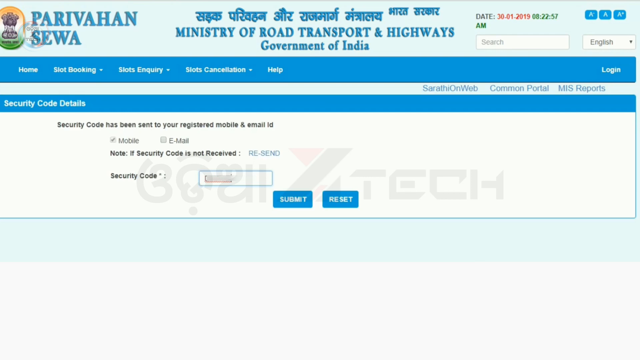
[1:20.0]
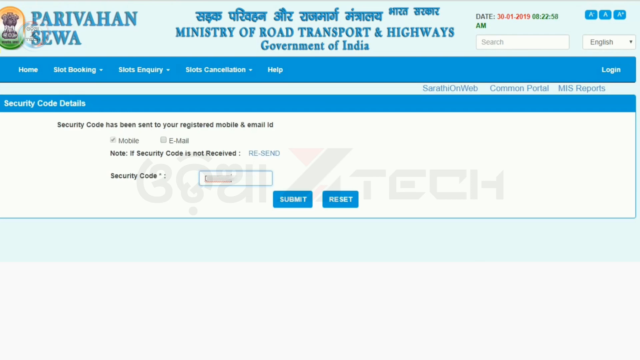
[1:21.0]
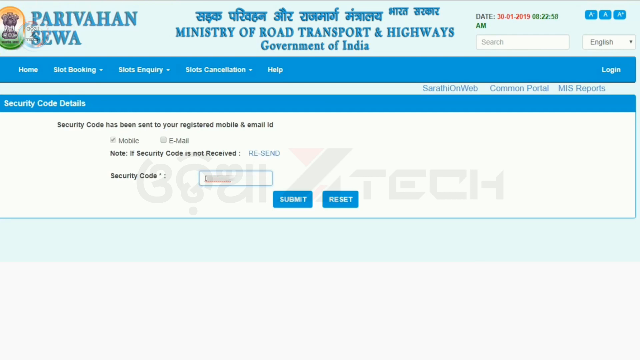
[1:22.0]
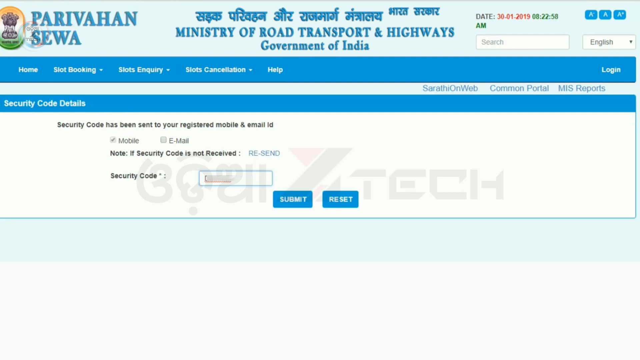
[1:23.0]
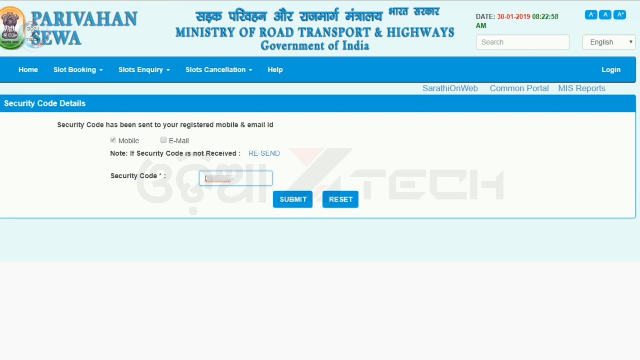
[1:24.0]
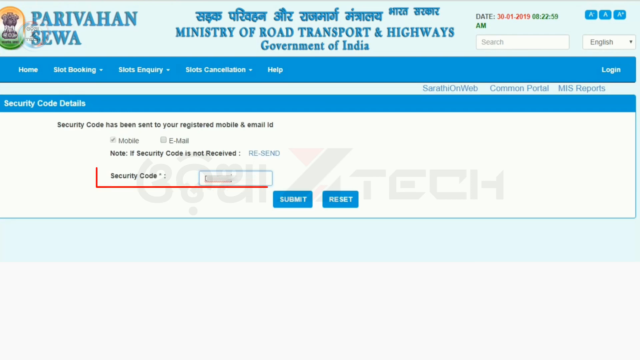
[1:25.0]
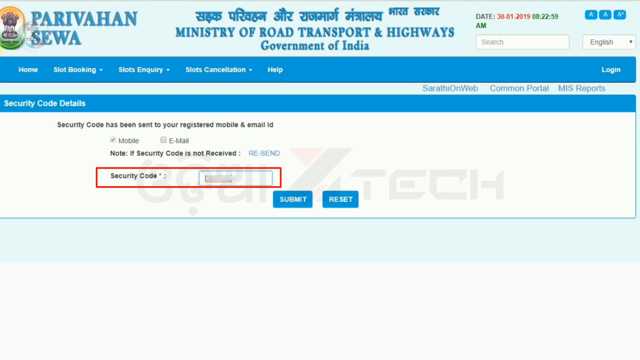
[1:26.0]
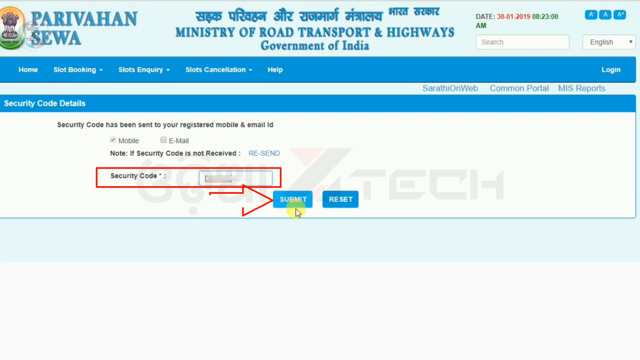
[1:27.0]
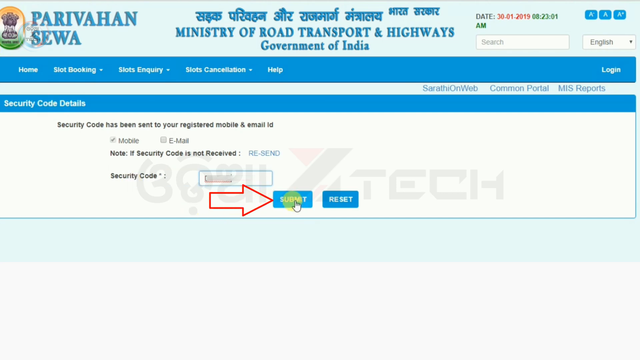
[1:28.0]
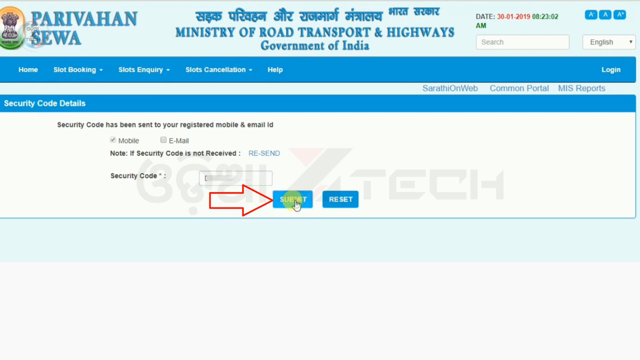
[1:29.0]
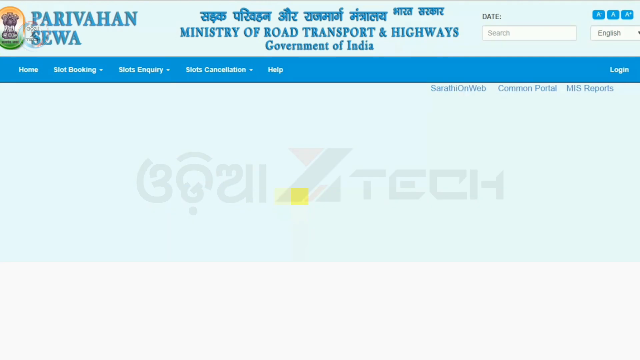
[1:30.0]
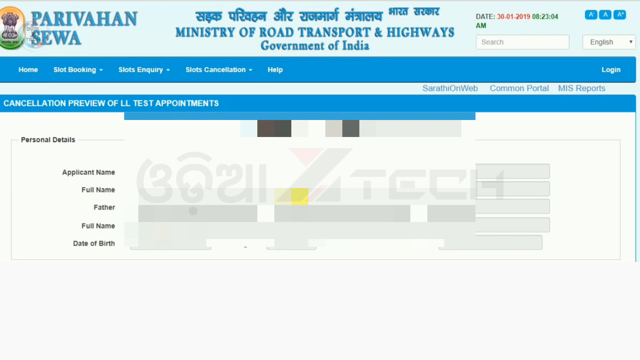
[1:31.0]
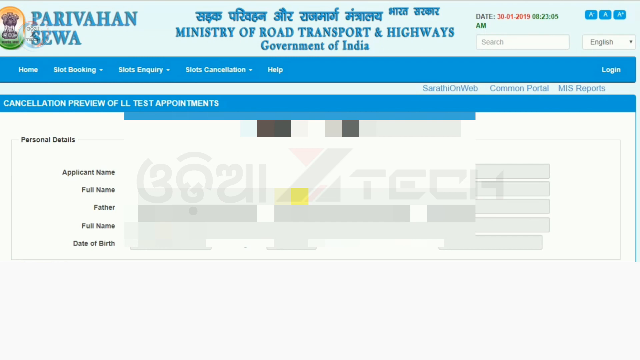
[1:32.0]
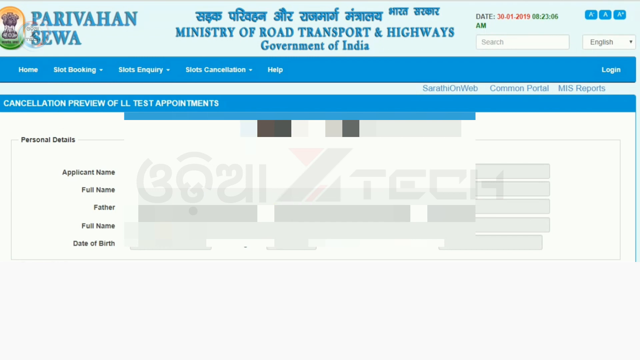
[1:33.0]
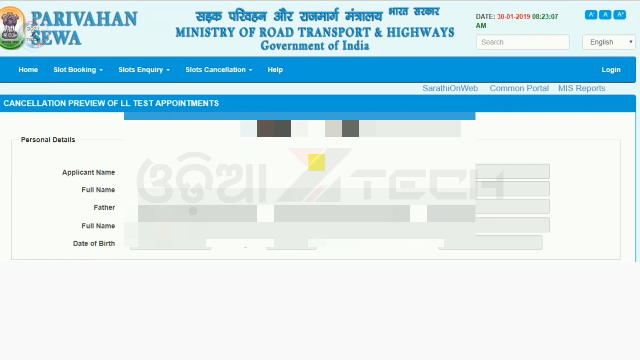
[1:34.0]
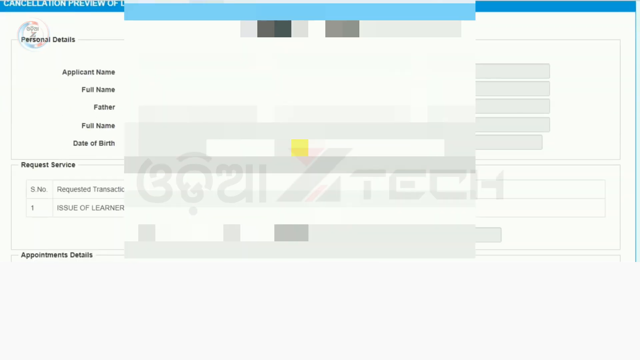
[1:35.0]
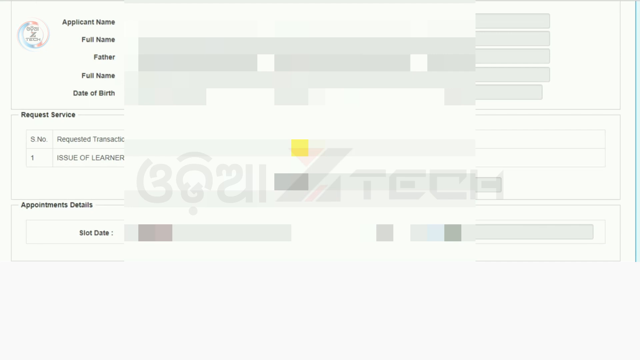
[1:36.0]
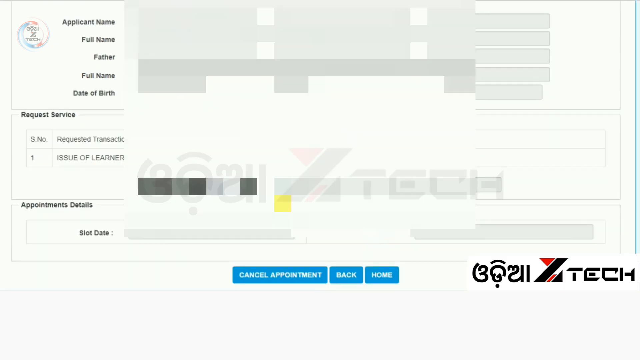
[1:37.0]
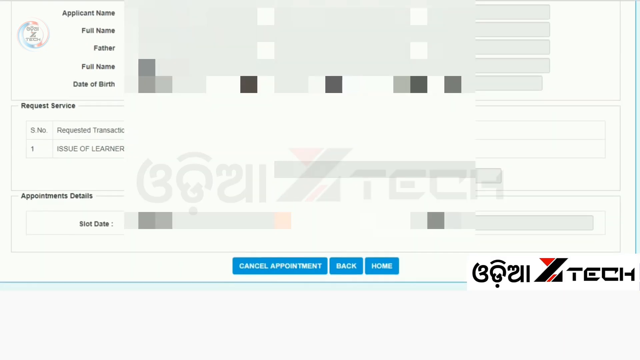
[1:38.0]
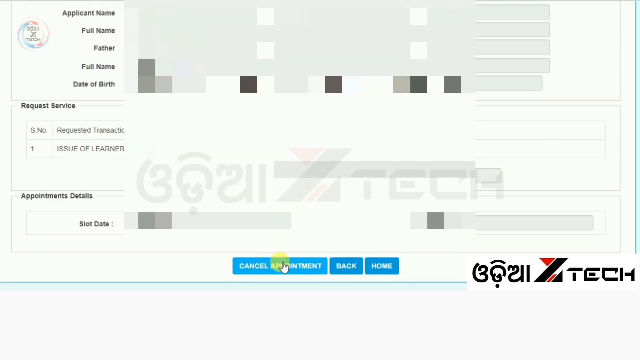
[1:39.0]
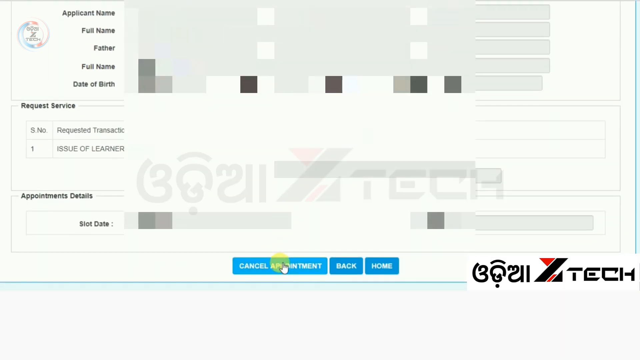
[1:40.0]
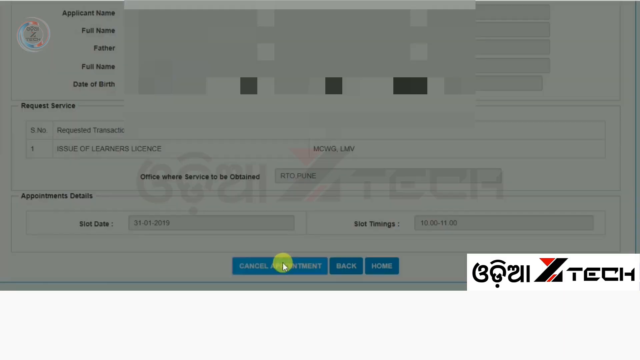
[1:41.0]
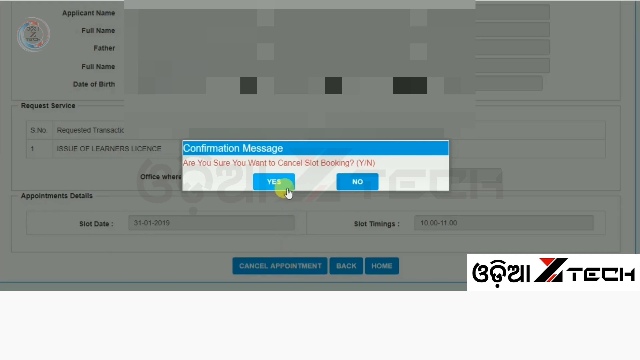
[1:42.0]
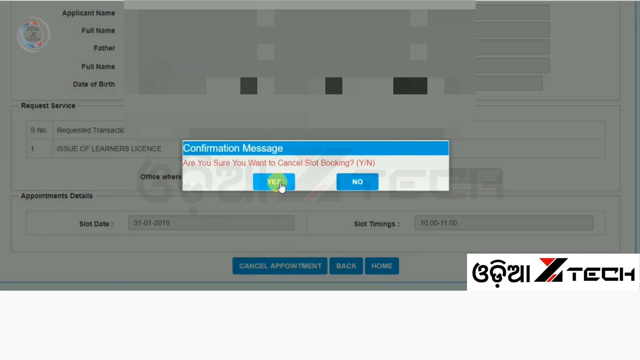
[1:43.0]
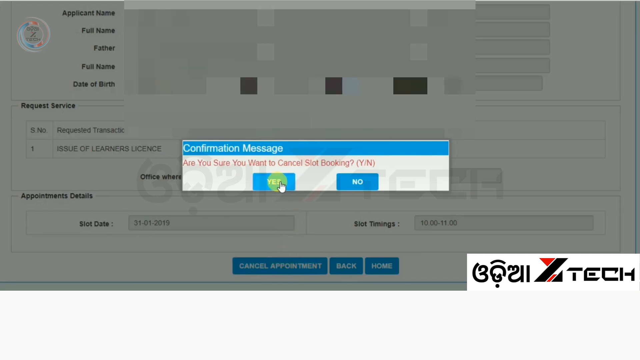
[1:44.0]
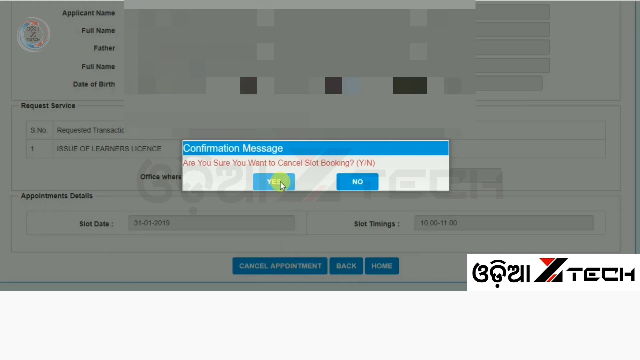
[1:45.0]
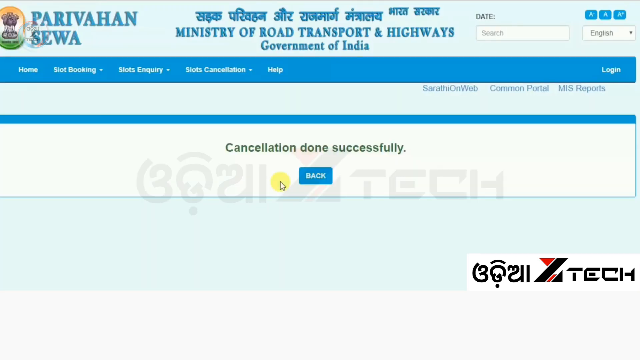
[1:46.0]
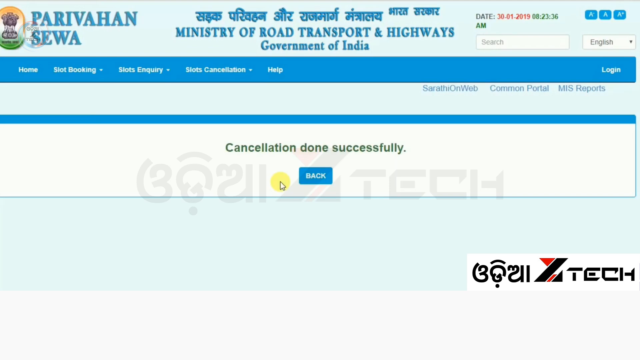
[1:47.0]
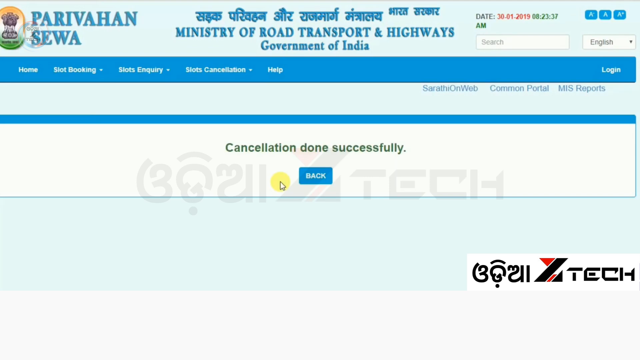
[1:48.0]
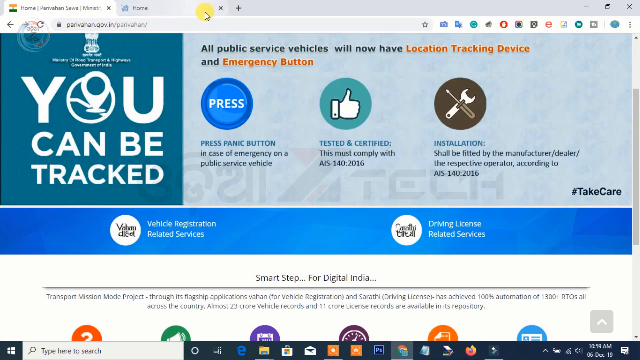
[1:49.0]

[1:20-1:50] On the Ministry of Road, Transport and Highways, Government of India website, a page titled "Security Code Details" states "Security Code has been sent to your registered mobile and email ID", with an option saying the security code is not received and a resend button. The security code in its box is blocked out. The cursor moves around, the security code is highlighted in red, and then the submit button is pressed. Next comes the cancellation preview page for the LL test appointment, where much of the information is blocked out; the fields for applicant name, full name, father's full name and date of birth are visible but their contents are hidden, as are the application details and the request form. A confirmation message asks "Are you sure you want to cancel slot booking?" with Yes and No options. The arrow hovers over Yes and clicks it, leading to a page stating that the cancellation was done successfully.